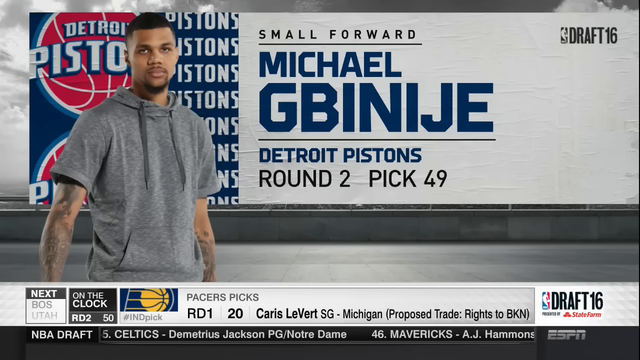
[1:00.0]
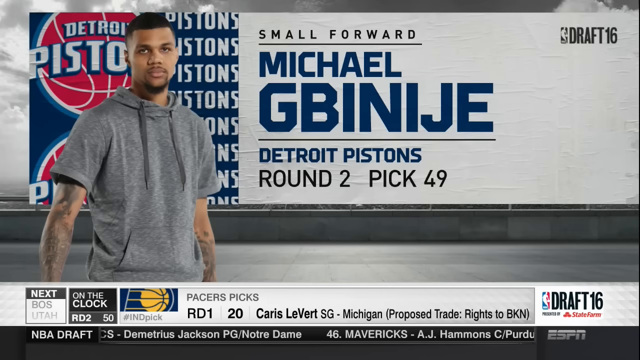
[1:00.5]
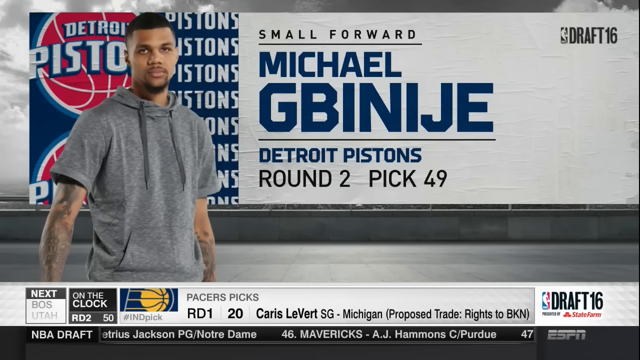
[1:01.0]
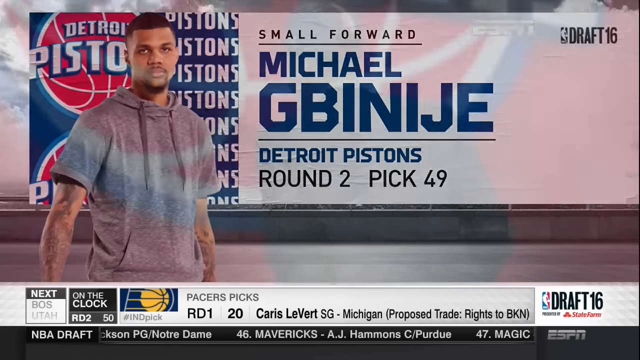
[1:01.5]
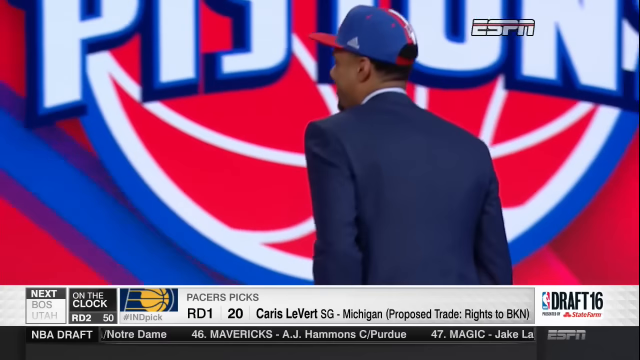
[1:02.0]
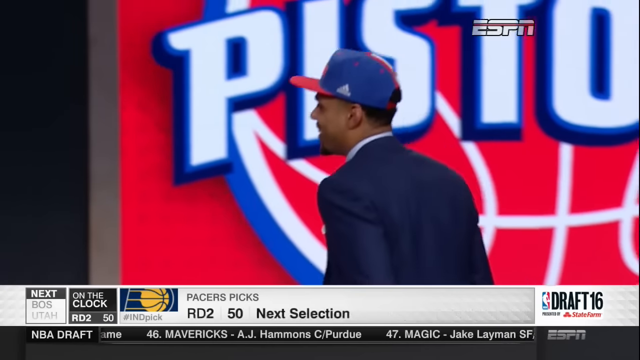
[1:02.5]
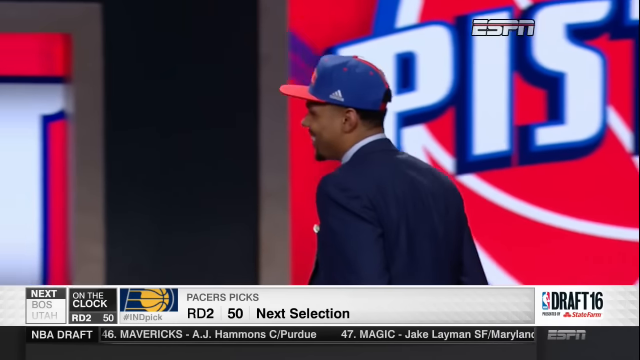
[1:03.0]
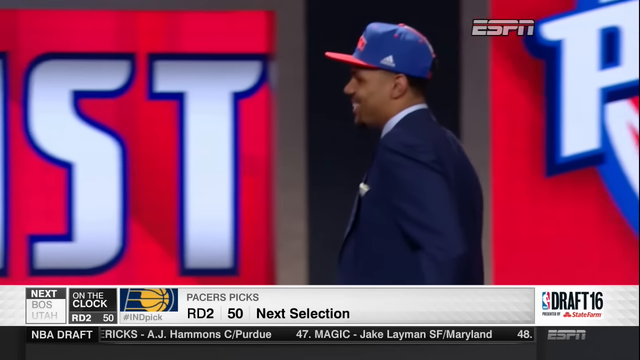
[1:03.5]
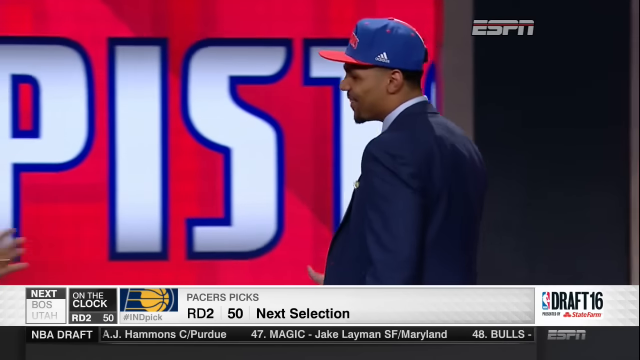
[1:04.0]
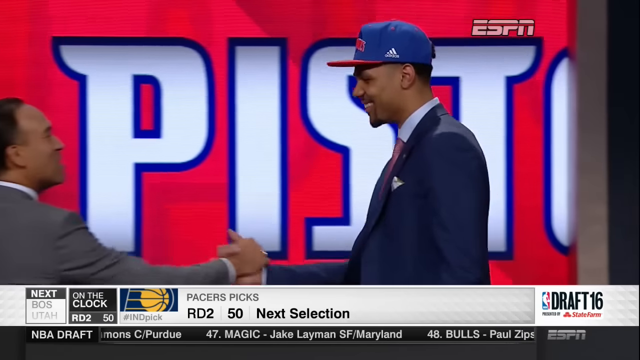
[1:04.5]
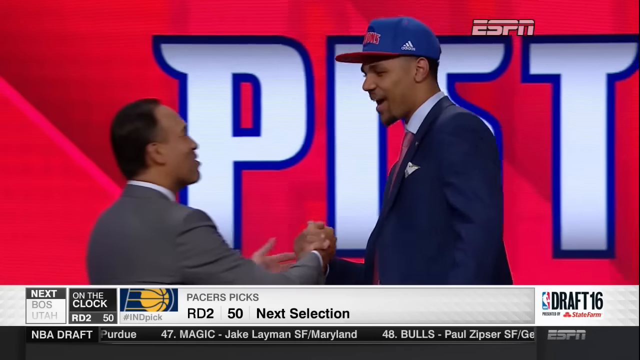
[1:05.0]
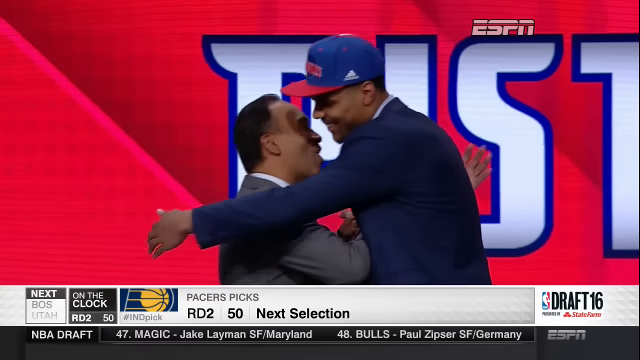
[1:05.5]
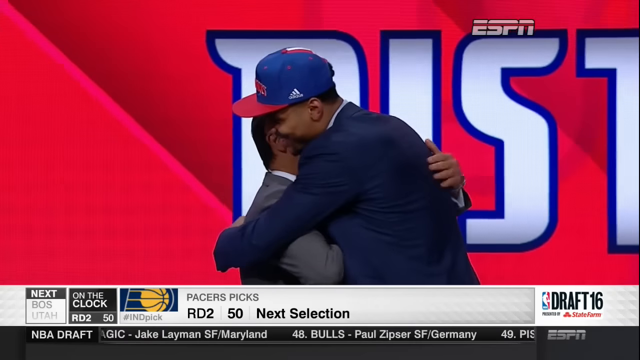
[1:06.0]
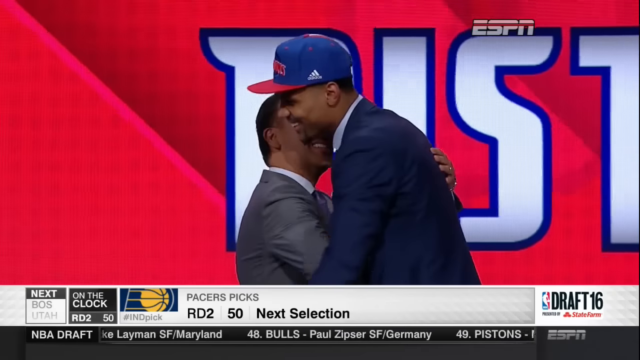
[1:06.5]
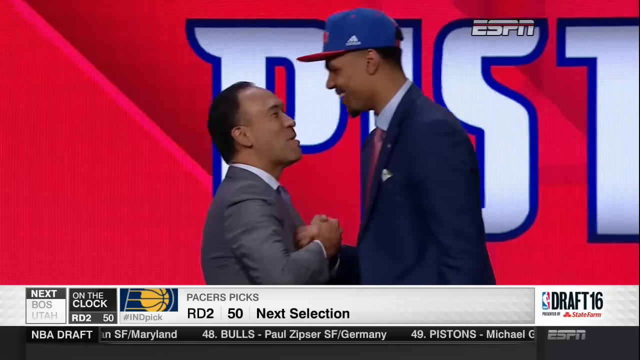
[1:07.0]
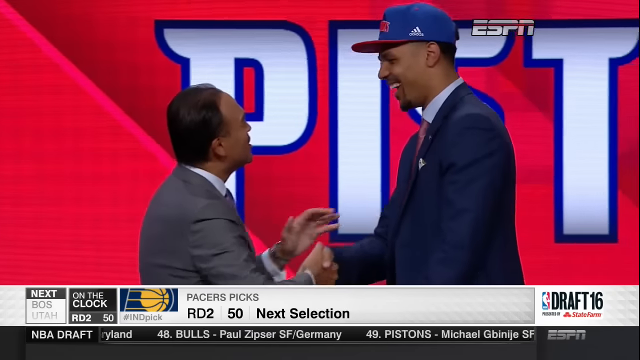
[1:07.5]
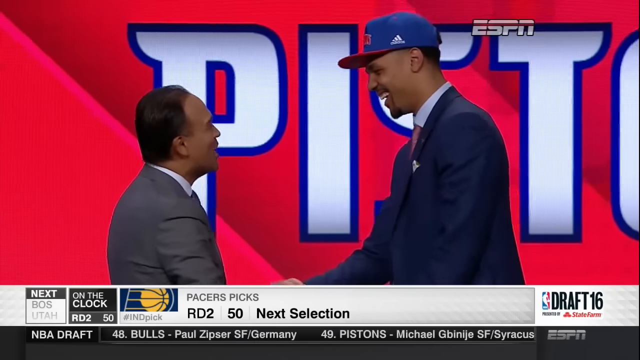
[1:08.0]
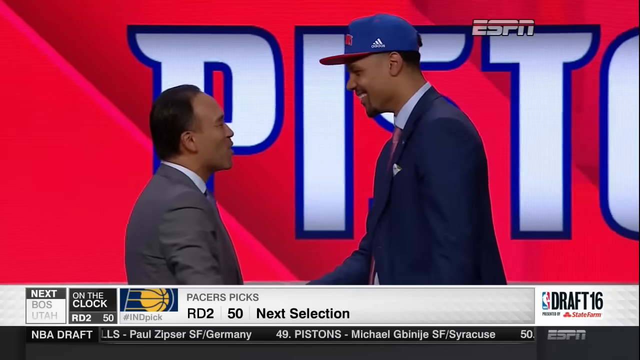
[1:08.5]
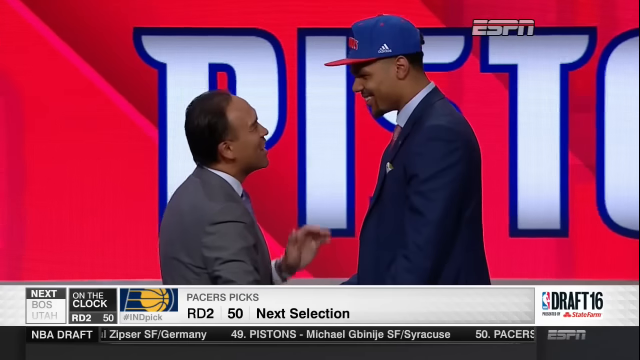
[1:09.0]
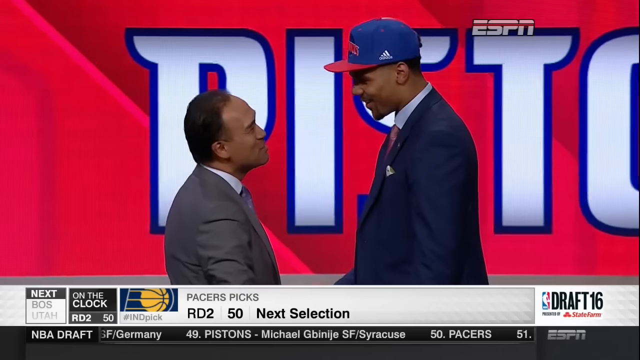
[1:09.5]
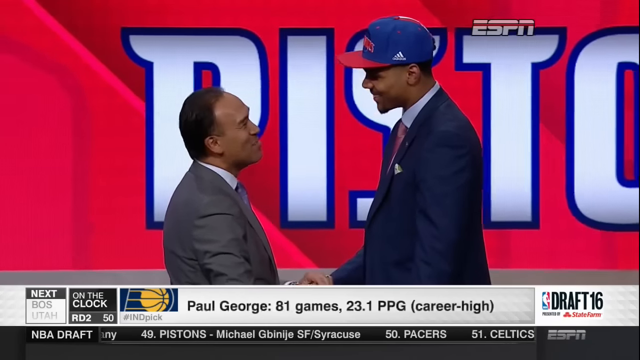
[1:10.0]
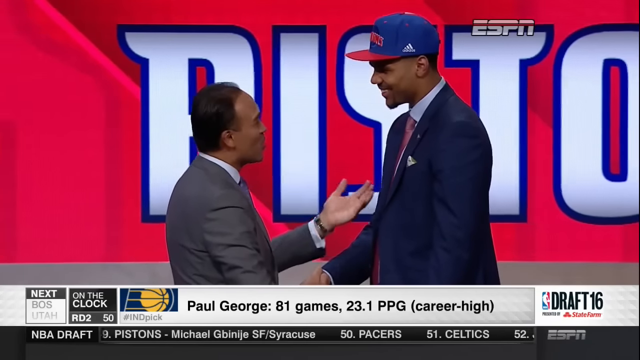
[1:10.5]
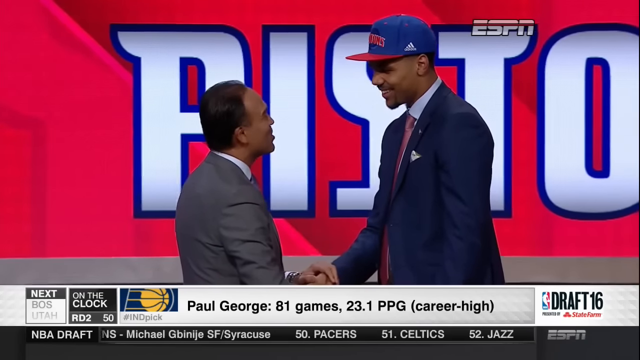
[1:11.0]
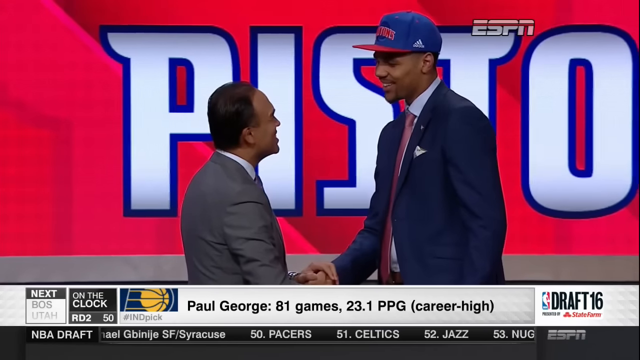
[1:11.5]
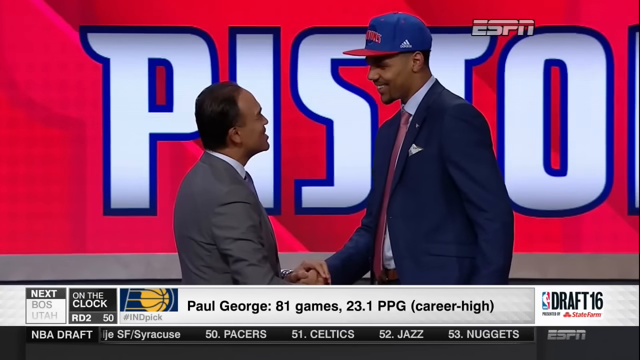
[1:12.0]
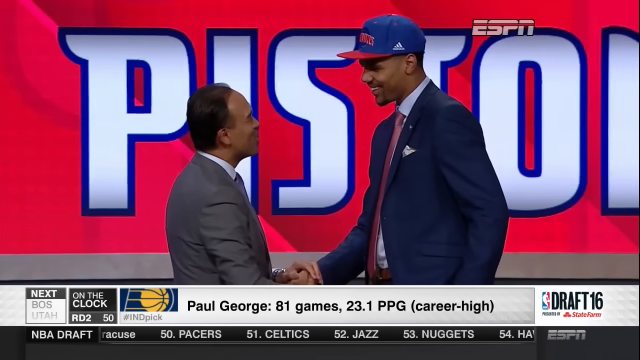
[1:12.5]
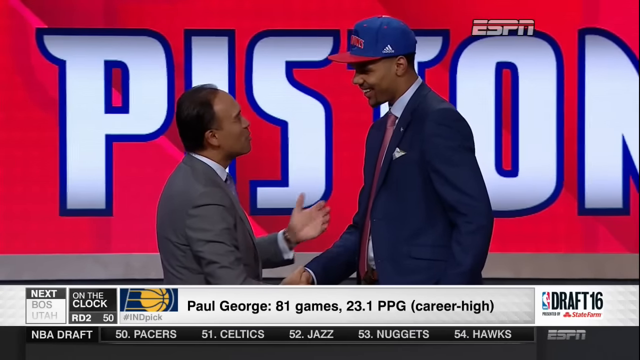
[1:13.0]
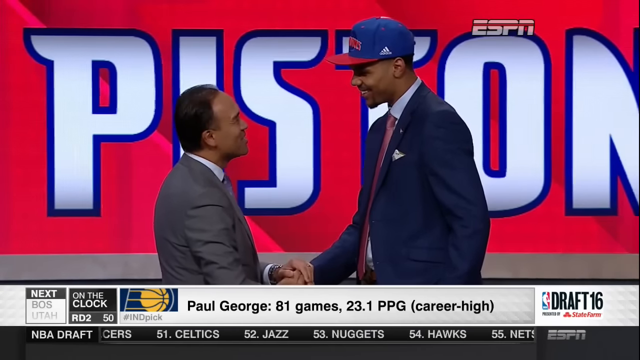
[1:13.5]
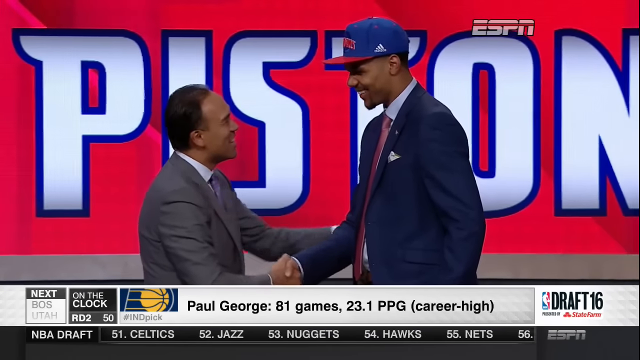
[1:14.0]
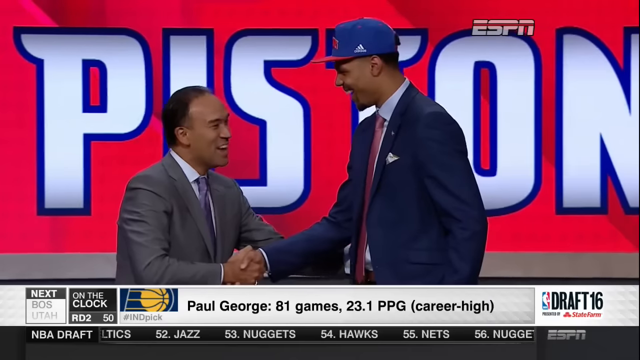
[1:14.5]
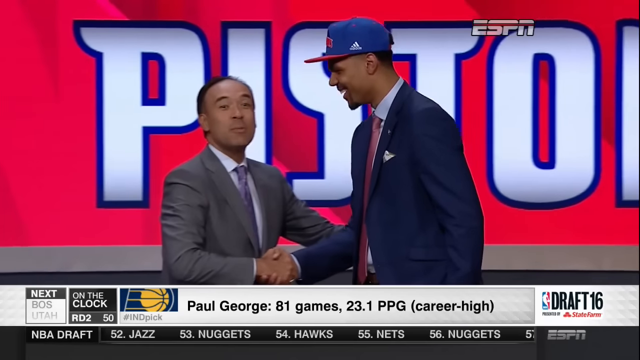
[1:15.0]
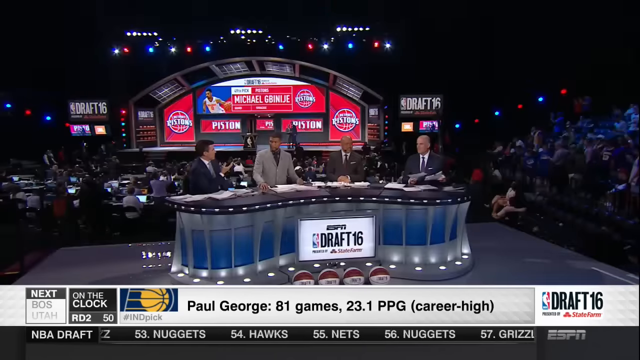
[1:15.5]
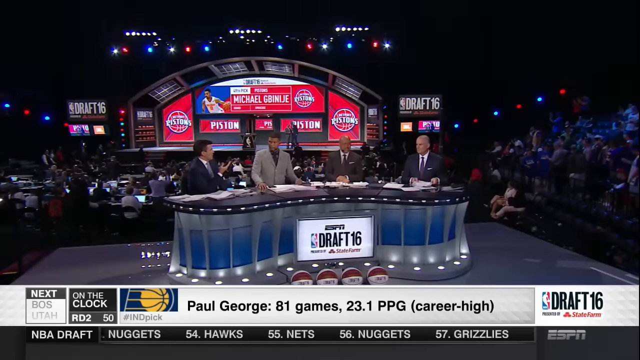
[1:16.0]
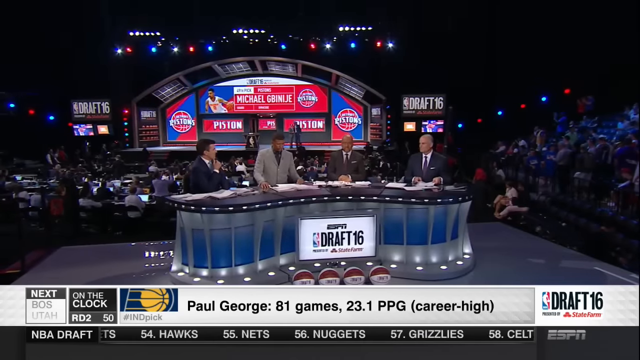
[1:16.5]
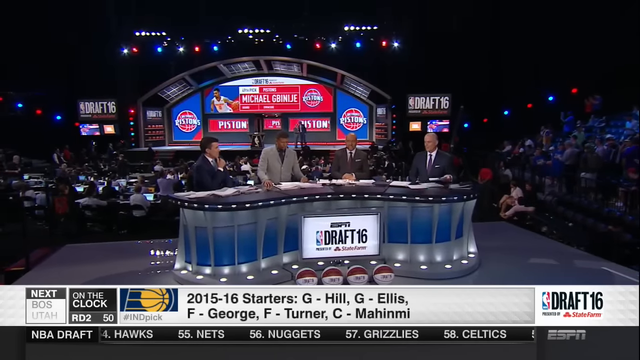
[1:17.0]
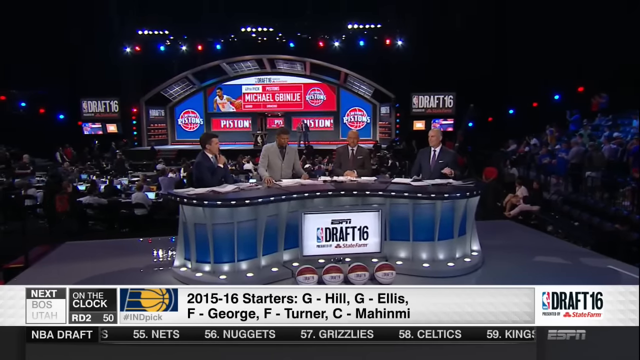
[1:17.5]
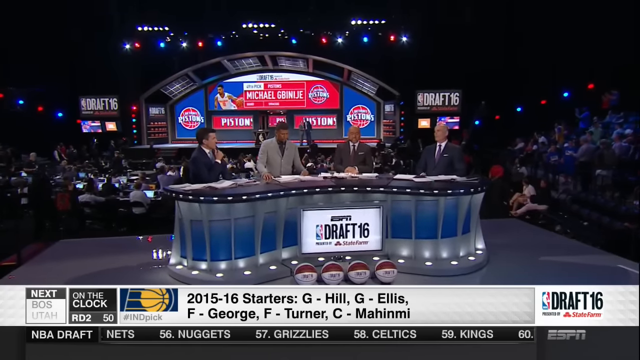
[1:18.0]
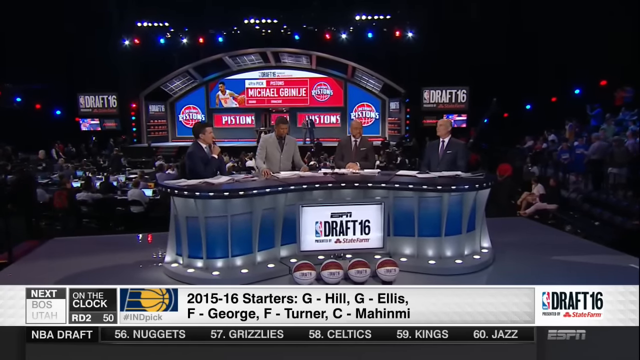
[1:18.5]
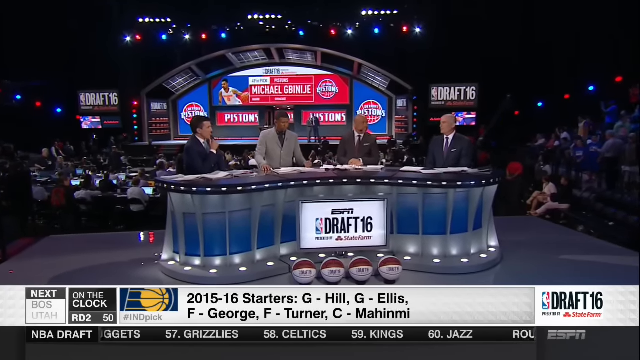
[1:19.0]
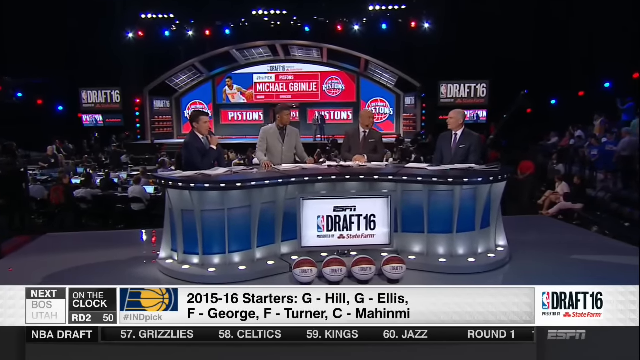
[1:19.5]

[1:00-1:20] In the upper right corner, "NBA draft" appears twice: one in gray and the other in regular color with "draft" and "16" in black. On the left is the Detroit Pistons logo in color, and to its right, in small black capital letters, "small forward", then a thin black line, then the player's name in bolder navy blue matching the Pistons' blue: "Michael" with the larger last name "GBINIJE". Below another thin line is "Detroit Pistons" in the same blue and "round two, pick 49". On the other side he is shown in a short-sleeve gray hoodie, with tattoos all over his arm, looking at the camera. At the bottom, "up next" shows "BOS", with "Utah on the clock" underneath, then "RD 2 50". Text also reads "Paul George, 81 games, 23.1 PPG, career high" and "2015-16 starters, G-Hill".